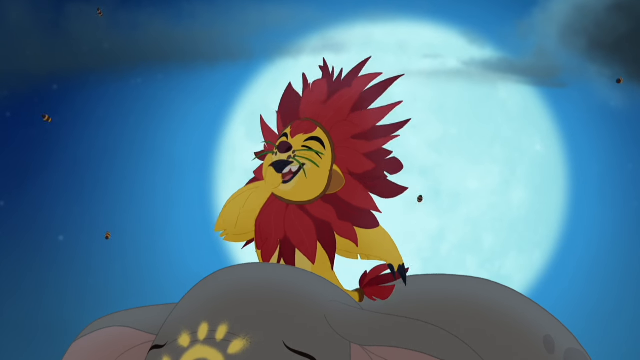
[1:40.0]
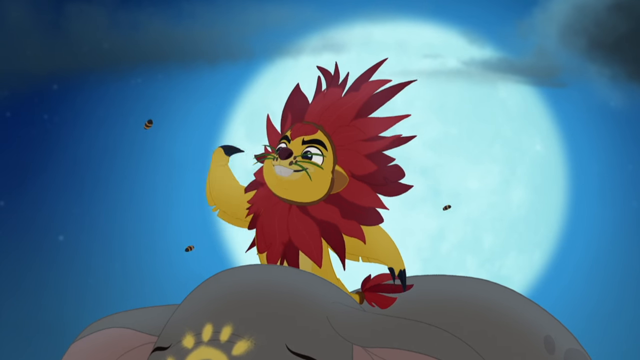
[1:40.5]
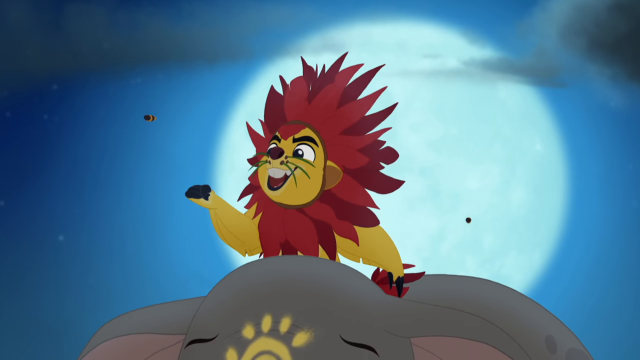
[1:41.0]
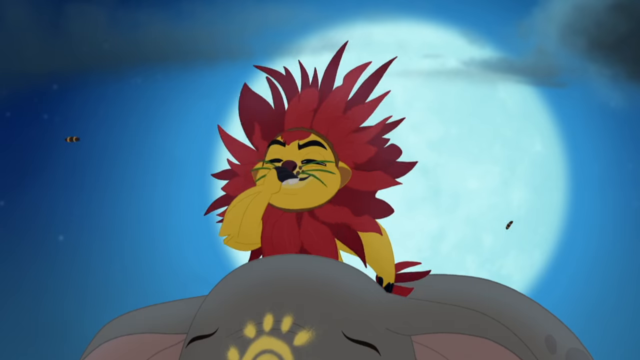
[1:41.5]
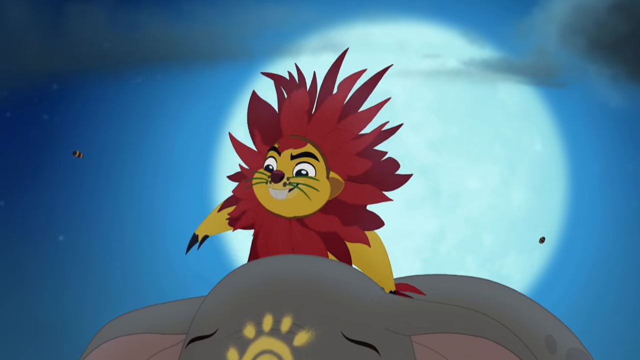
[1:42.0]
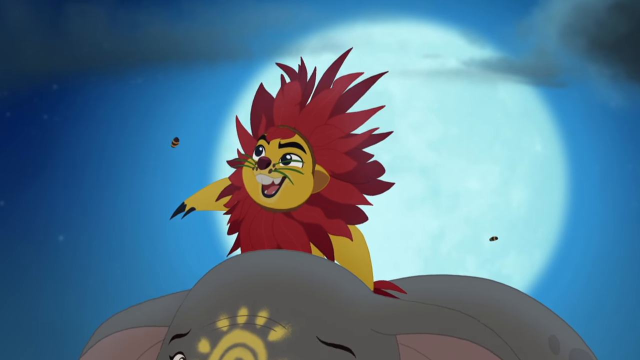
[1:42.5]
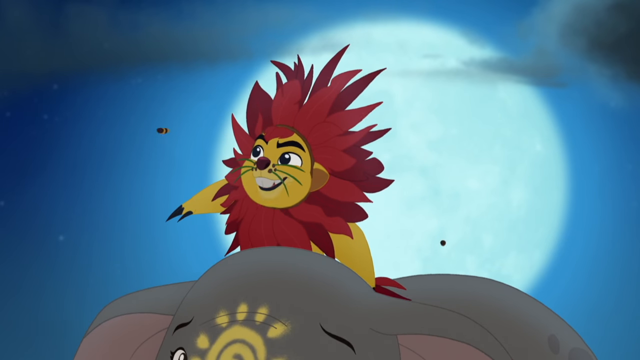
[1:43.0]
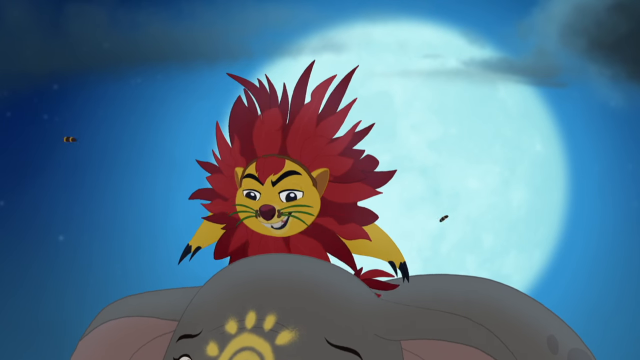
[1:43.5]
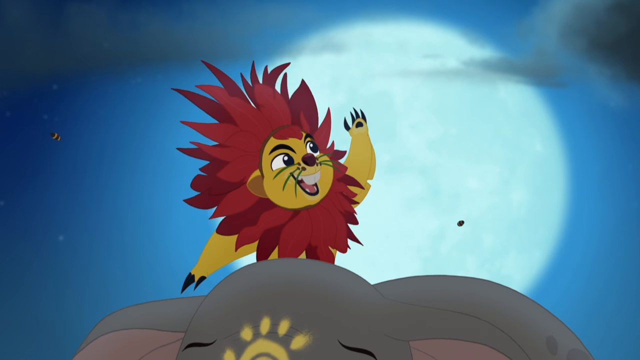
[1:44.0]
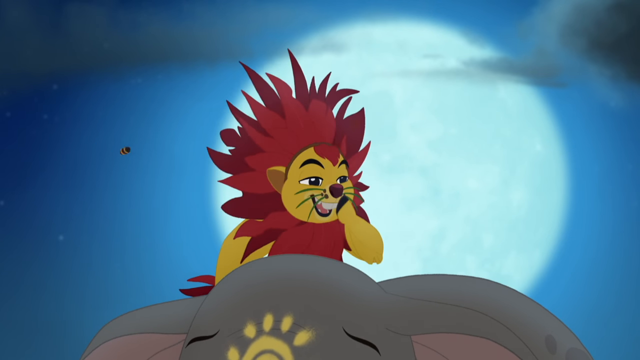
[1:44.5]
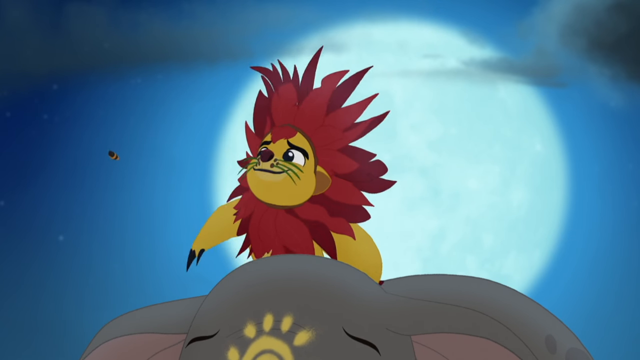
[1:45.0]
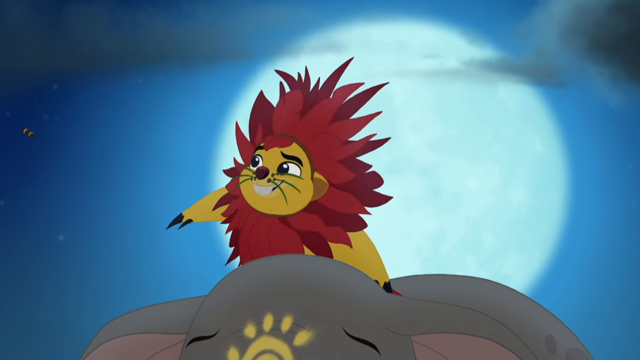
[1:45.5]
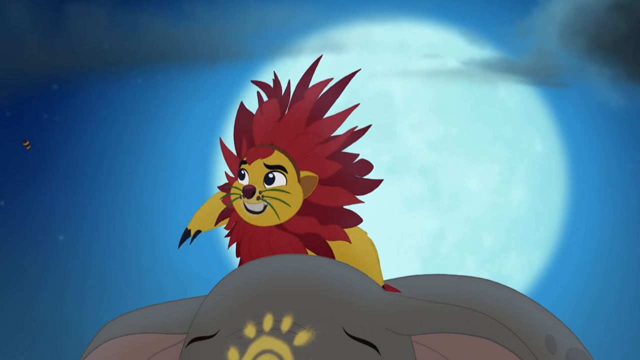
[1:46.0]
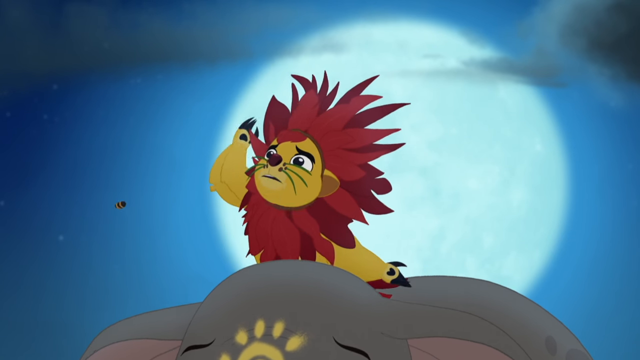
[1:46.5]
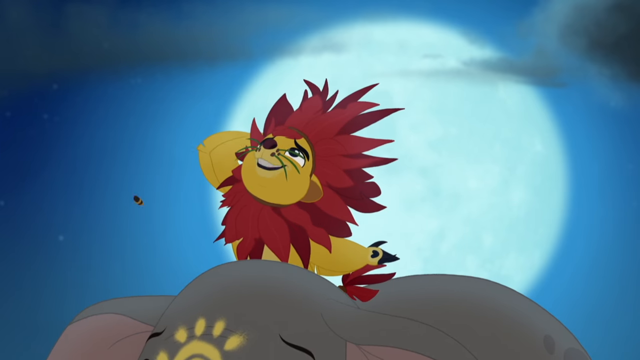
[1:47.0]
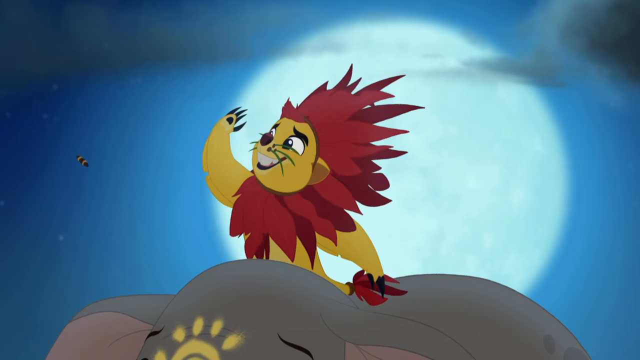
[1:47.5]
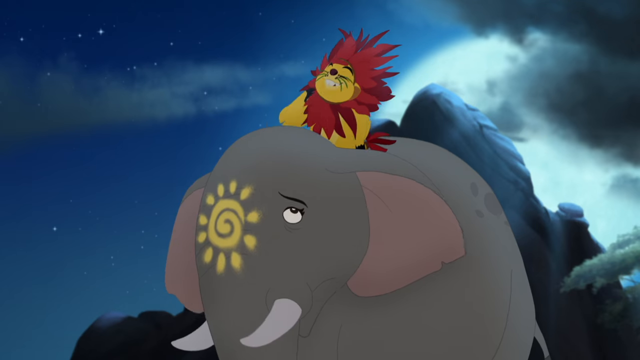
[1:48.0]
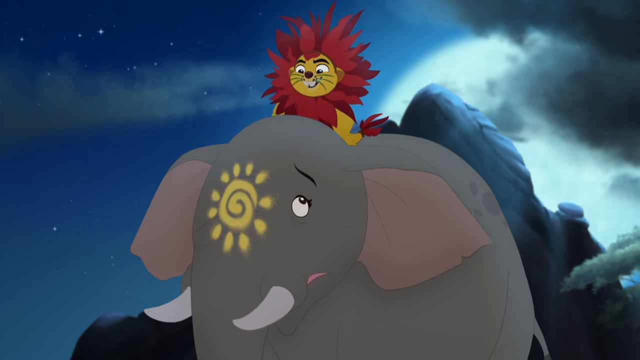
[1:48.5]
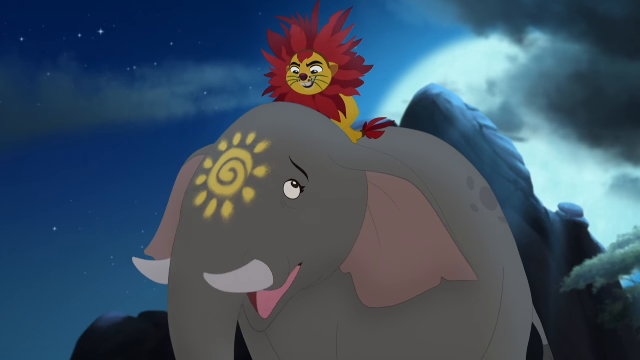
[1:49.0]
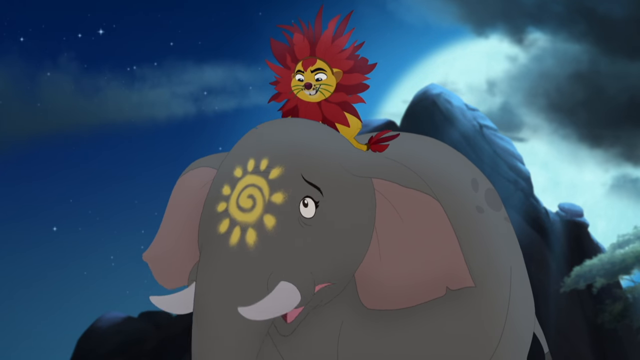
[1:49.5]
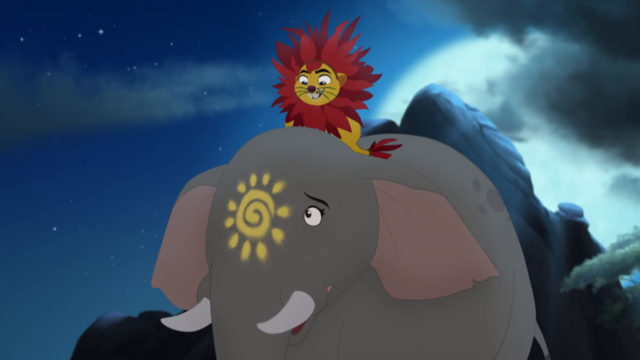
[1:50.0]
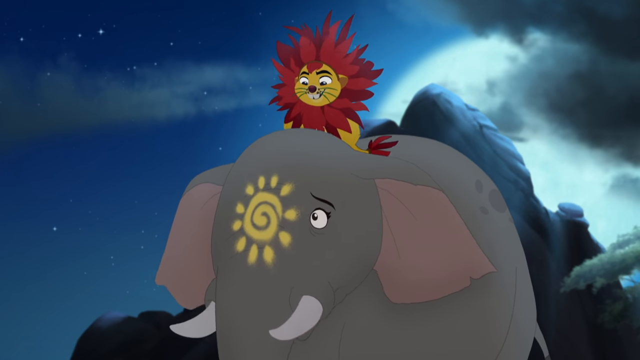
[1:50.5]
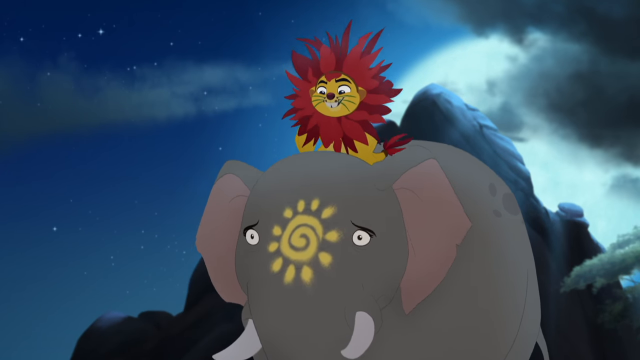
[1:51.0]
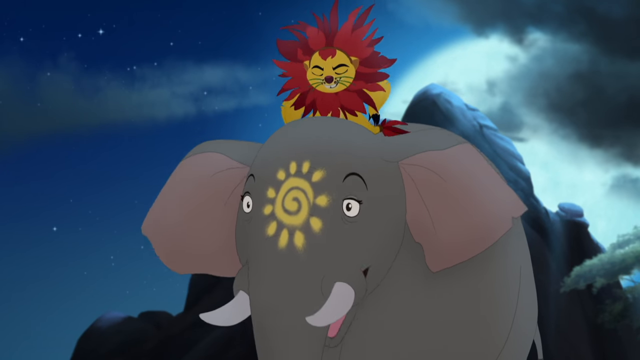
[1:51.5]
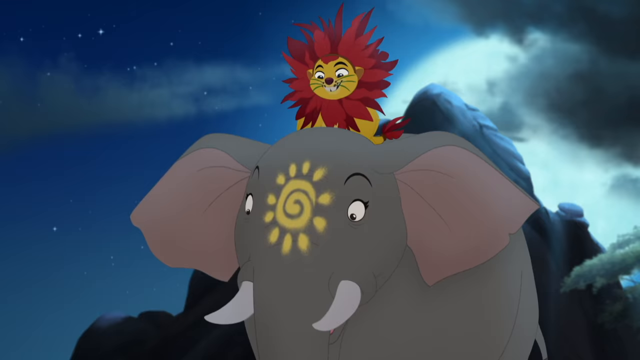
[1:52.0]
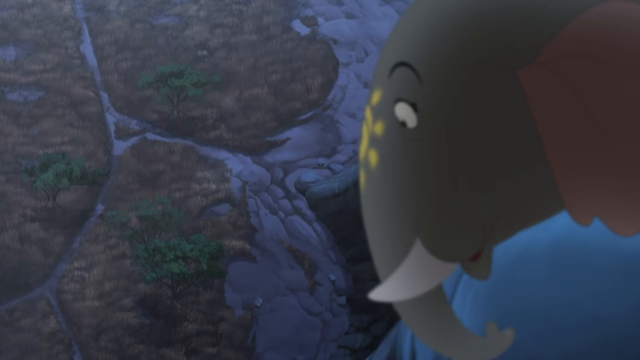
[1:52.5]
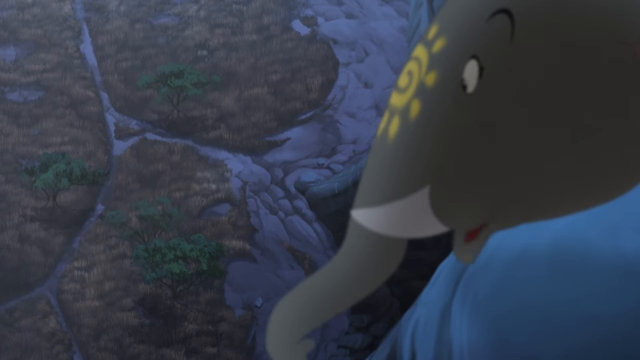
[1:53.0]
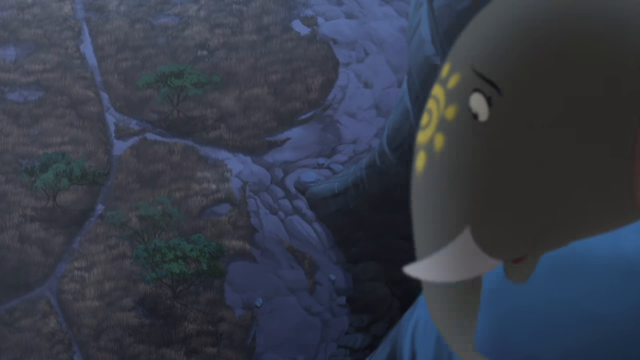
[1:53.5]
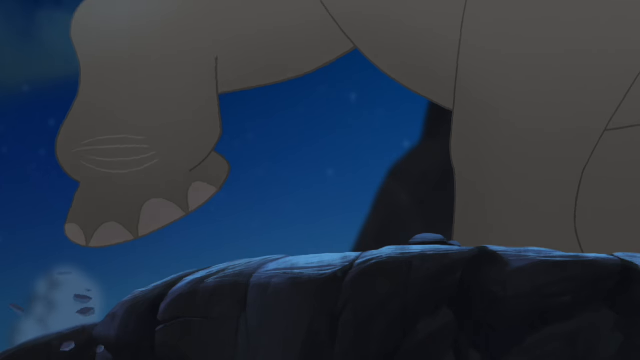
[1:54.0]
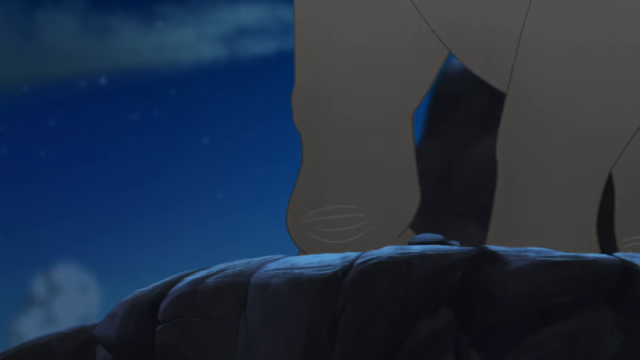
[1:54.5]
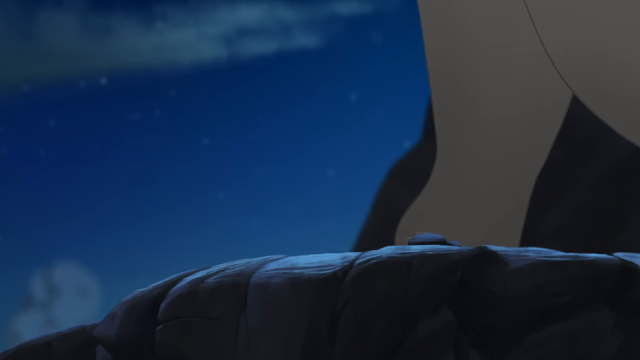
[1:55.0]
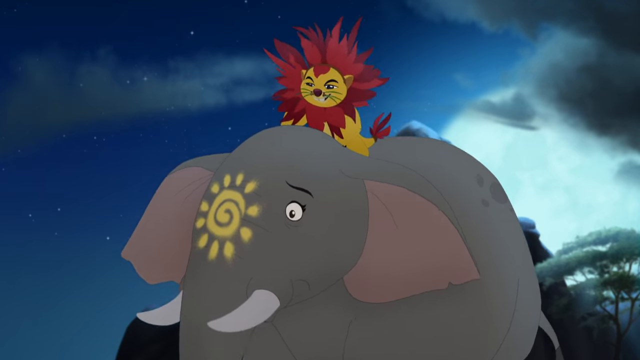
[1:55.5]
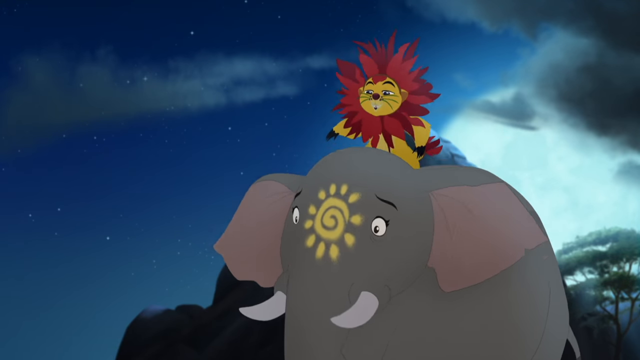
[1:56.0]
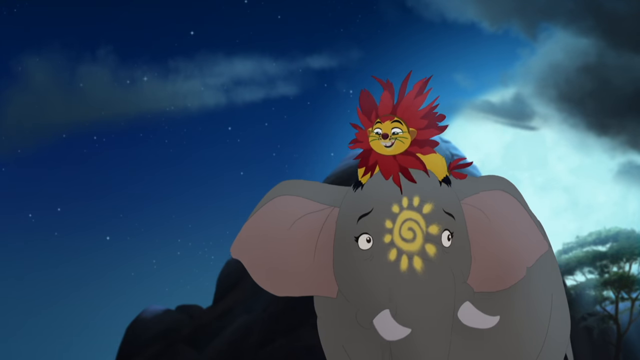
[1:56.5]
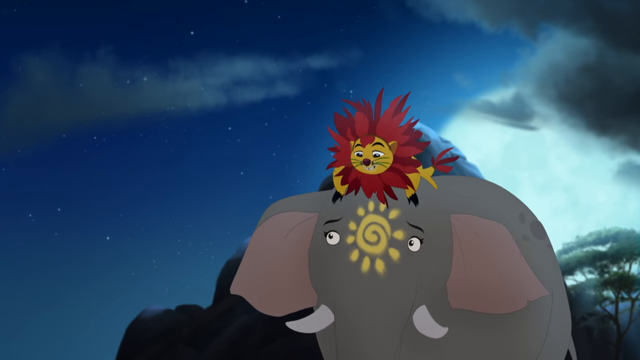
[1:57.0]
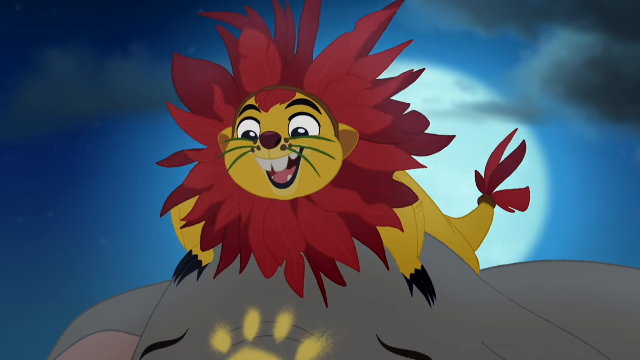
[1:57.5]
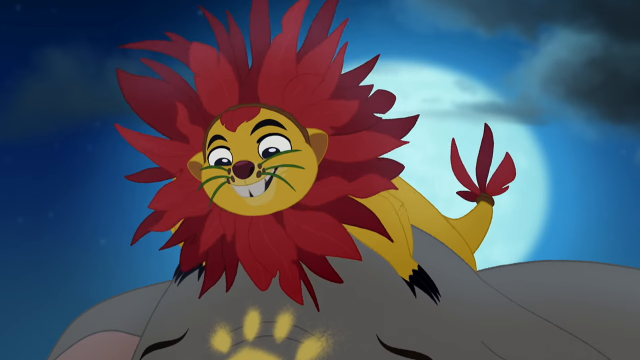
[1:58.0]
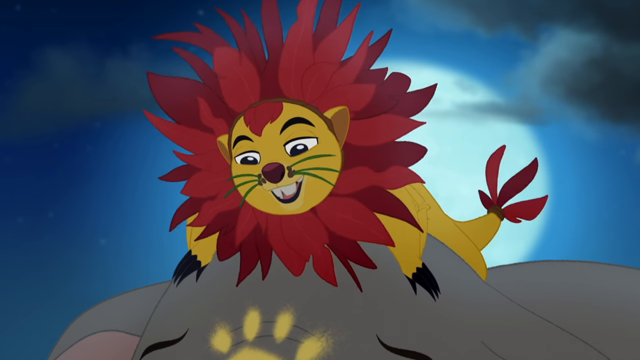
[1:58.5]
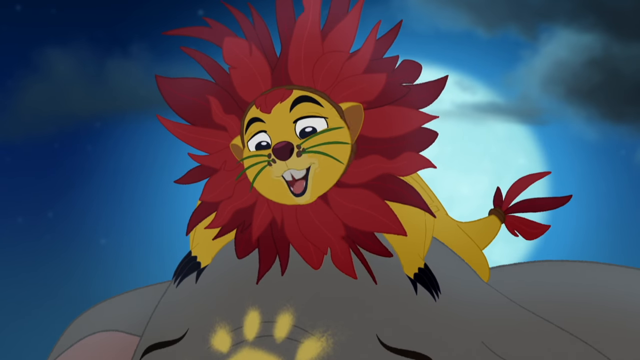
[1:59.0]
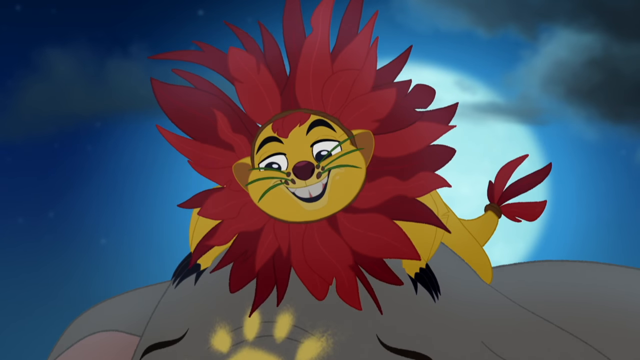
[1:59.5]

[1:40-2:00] In the cartoonish illustration, a small lion with yellow fur, a red mane and red fur at the tip of its tail grabs insects out of the air and eats them, one after another. A moon and some gray-looking clouds are in the sky behind the lion. He is sitting on top of a big elephant, which is gray with pink insides of its ears and mouth, a yellow sun-looking symbol on its forehead right above its trunk, beady black eyes and two small tusks. The elephant talks to the lion sitting on the back of its neck. The elephant looks down below the cliff to the land below, where three trees with green leaves are visible. It moves its foot back away from the cliff edge and steps back a few steps. The little lion, still on top of the elephant, is shown talking.